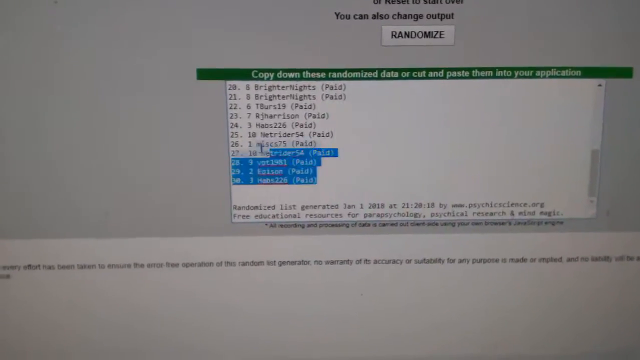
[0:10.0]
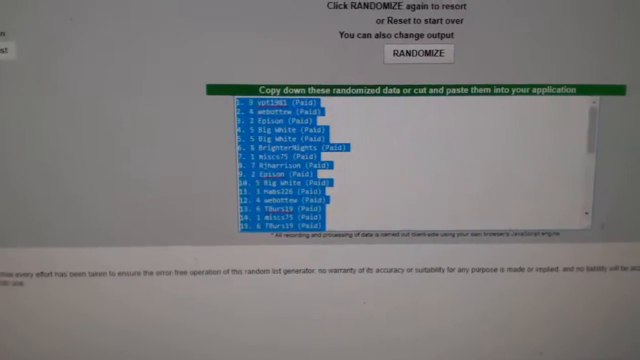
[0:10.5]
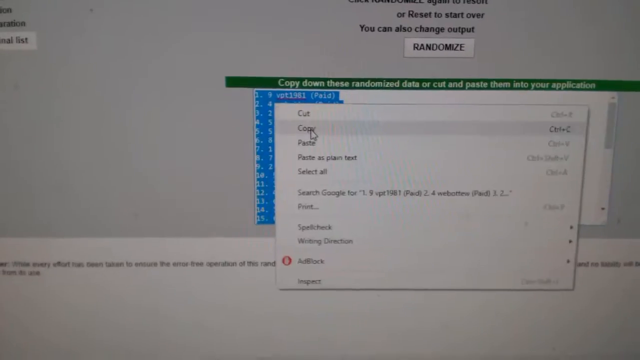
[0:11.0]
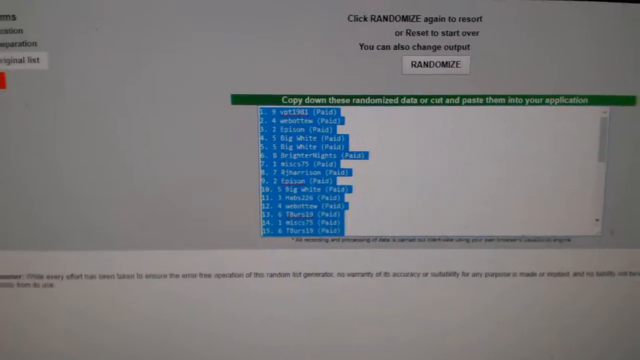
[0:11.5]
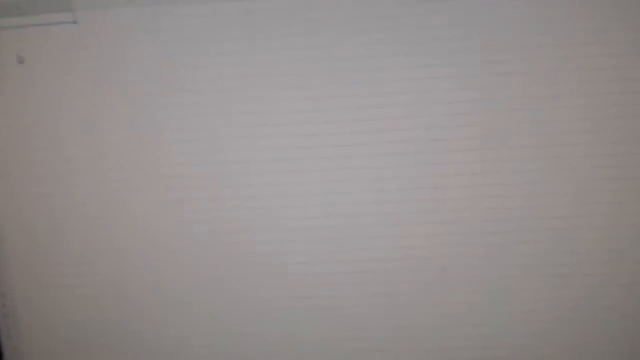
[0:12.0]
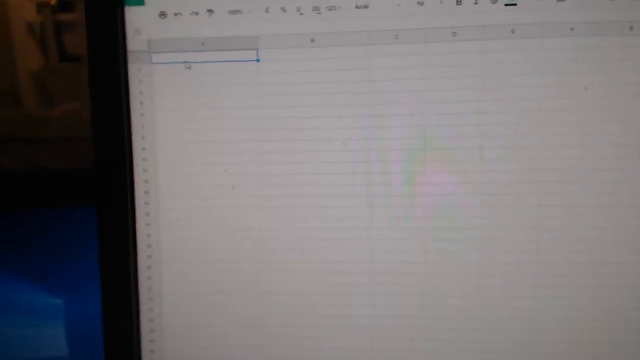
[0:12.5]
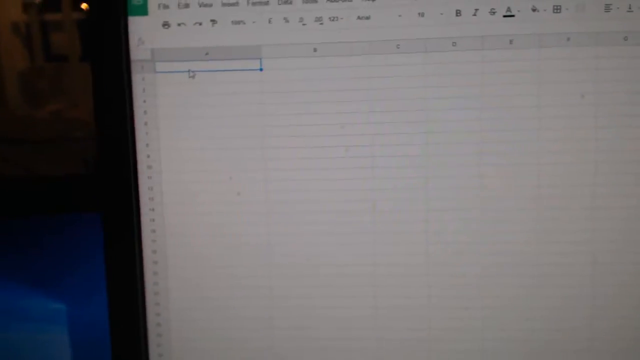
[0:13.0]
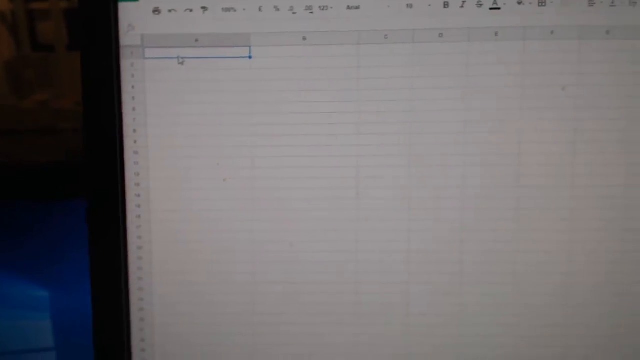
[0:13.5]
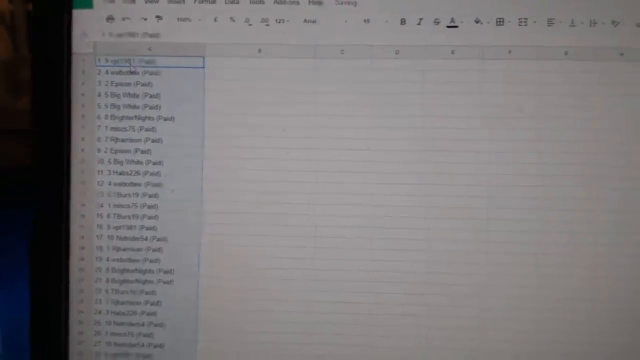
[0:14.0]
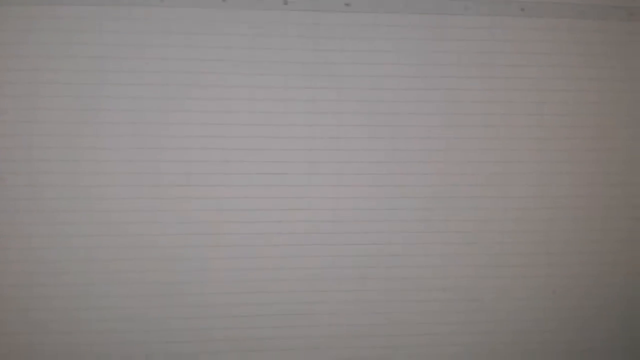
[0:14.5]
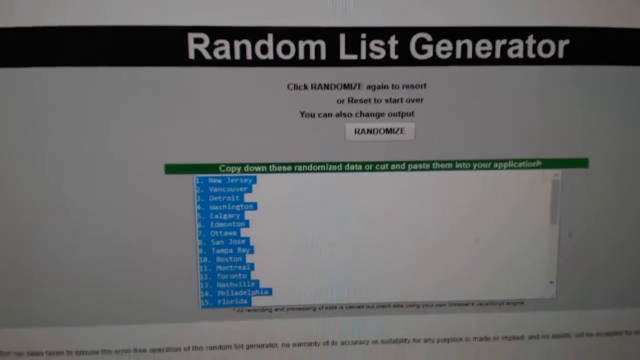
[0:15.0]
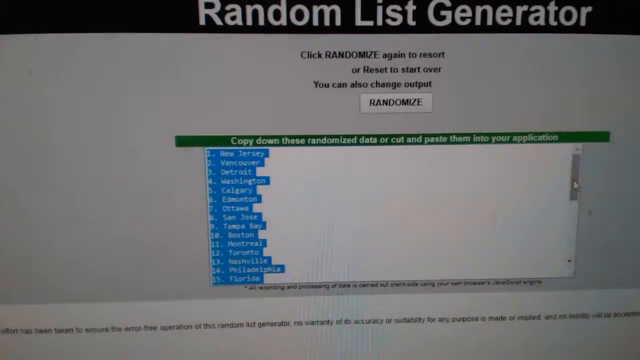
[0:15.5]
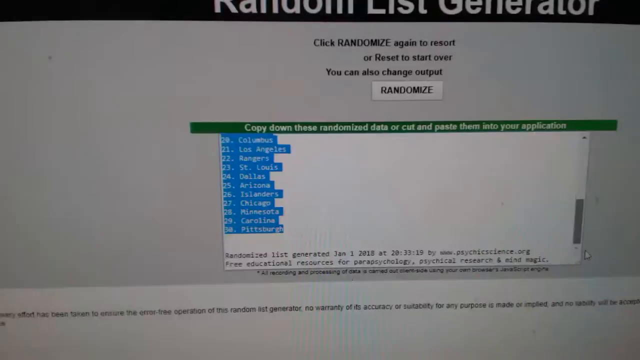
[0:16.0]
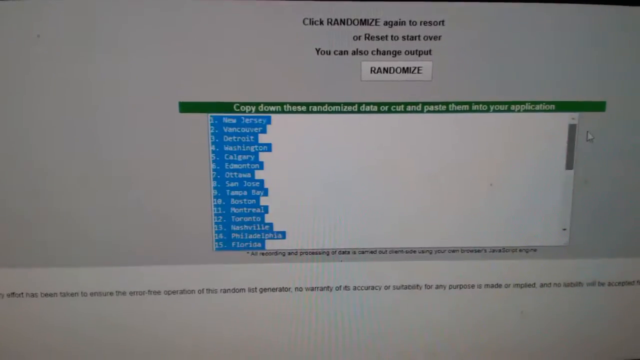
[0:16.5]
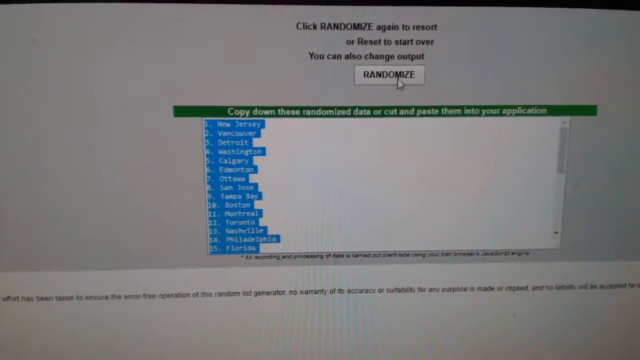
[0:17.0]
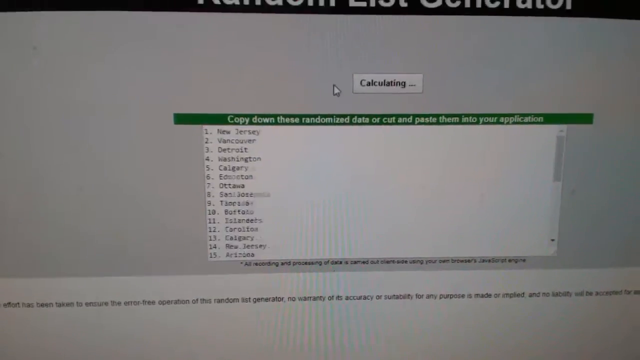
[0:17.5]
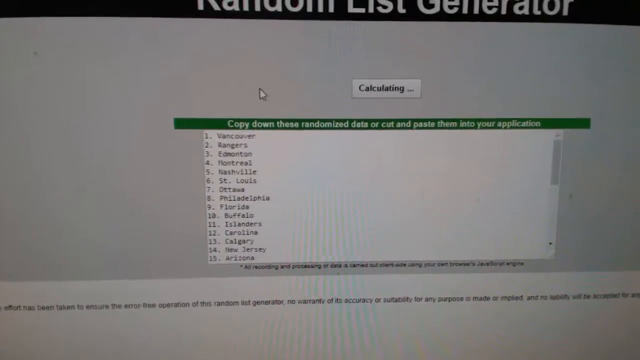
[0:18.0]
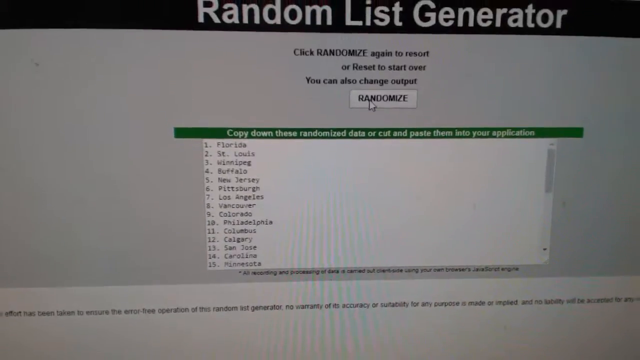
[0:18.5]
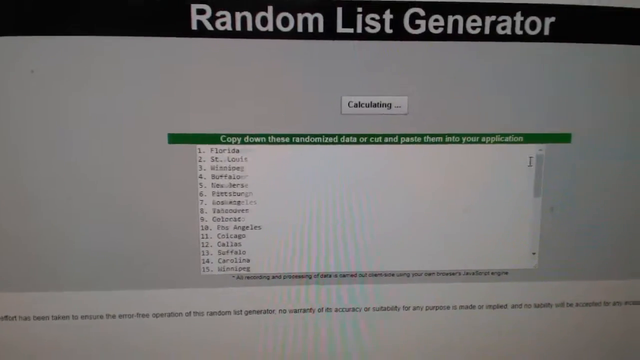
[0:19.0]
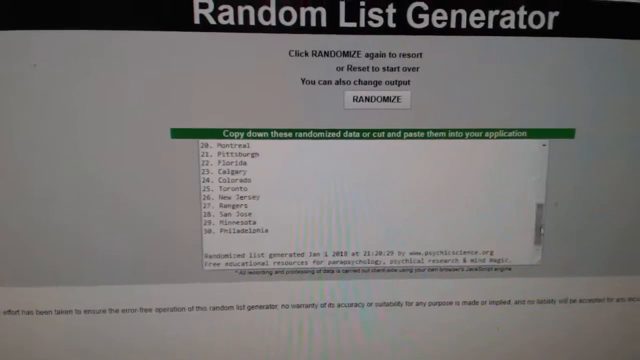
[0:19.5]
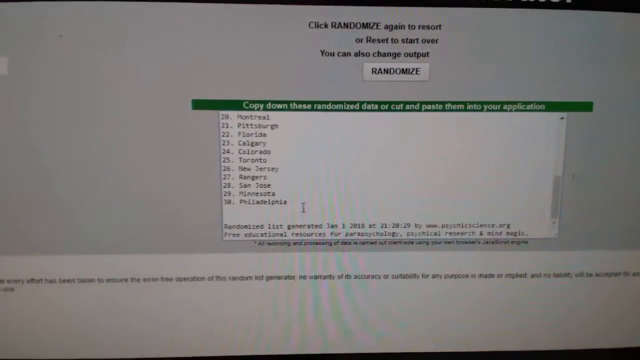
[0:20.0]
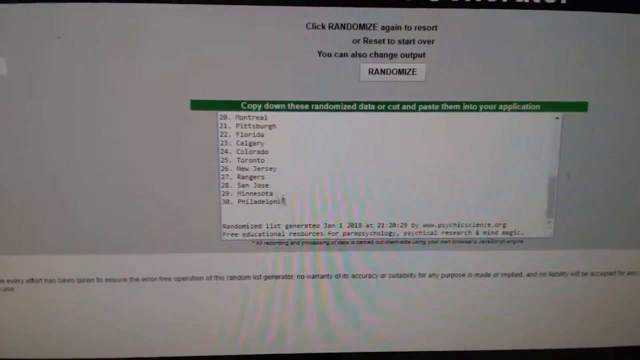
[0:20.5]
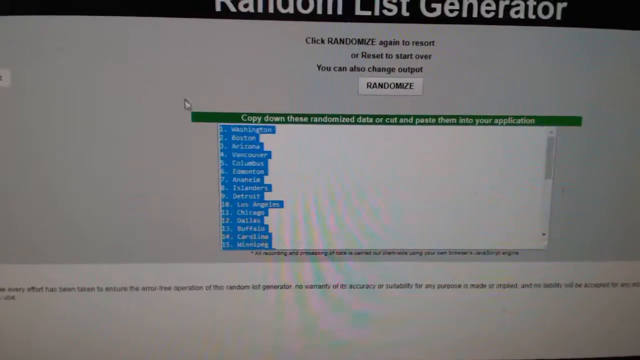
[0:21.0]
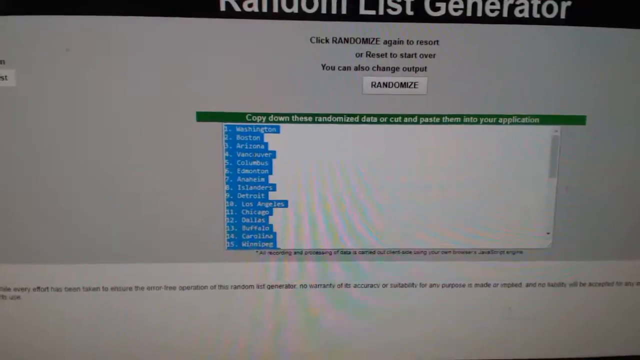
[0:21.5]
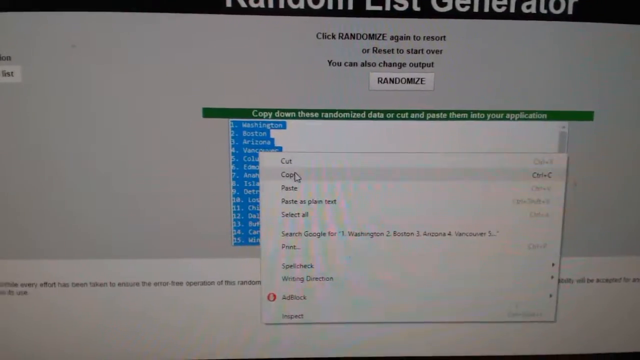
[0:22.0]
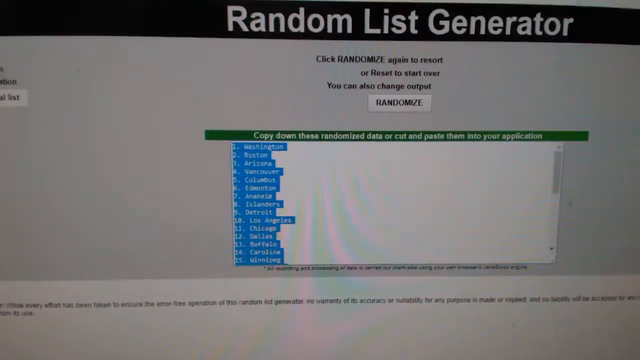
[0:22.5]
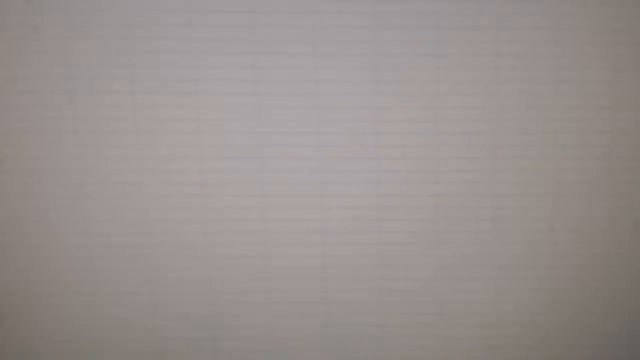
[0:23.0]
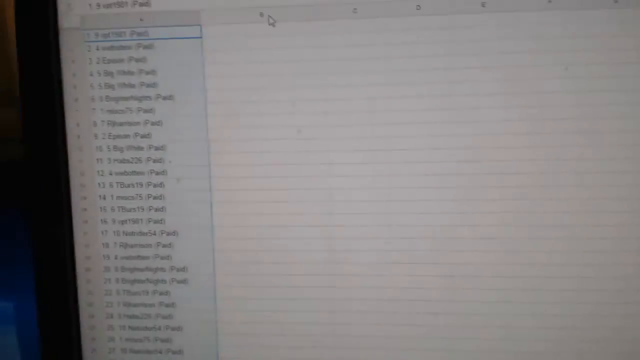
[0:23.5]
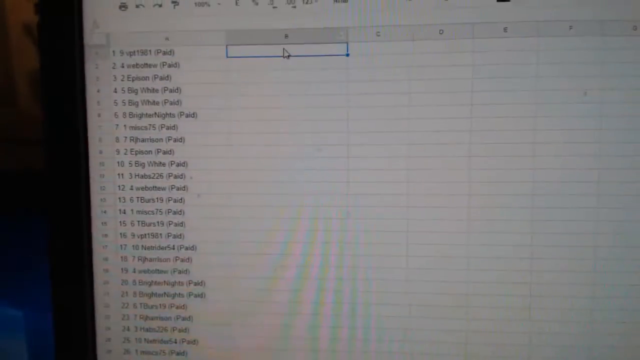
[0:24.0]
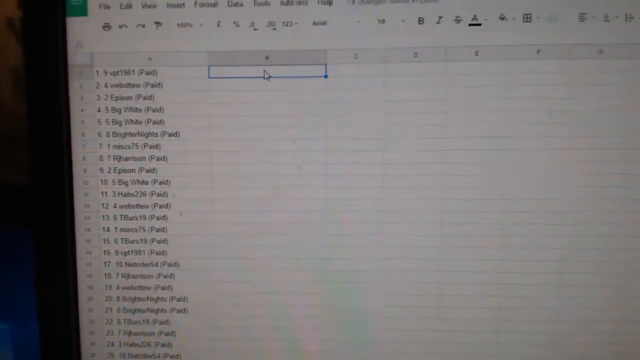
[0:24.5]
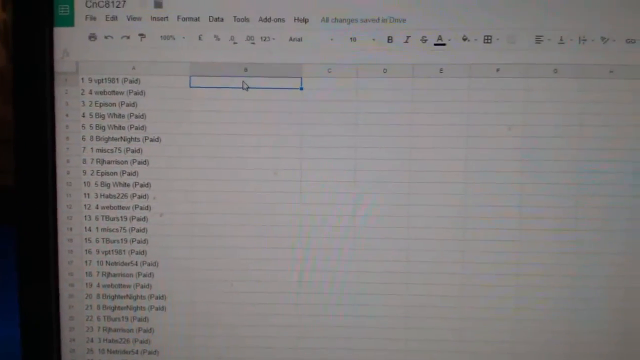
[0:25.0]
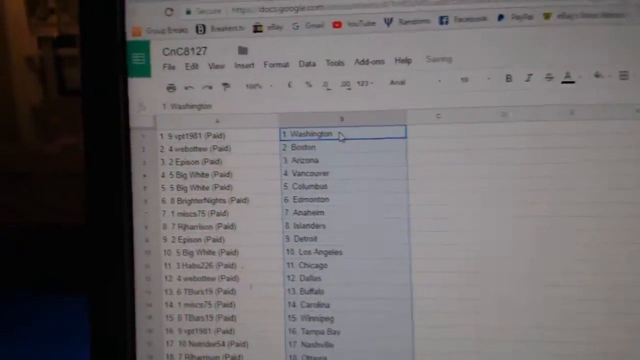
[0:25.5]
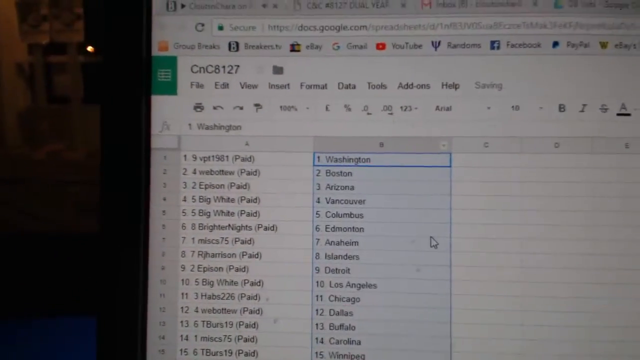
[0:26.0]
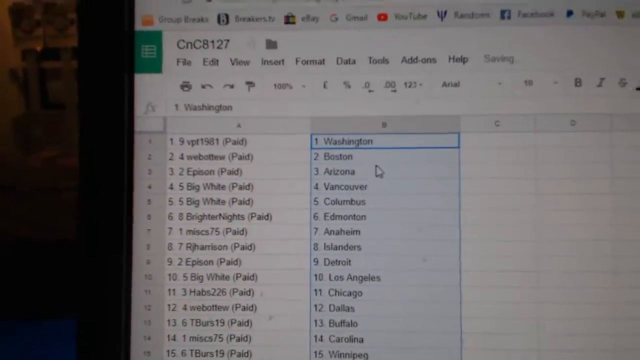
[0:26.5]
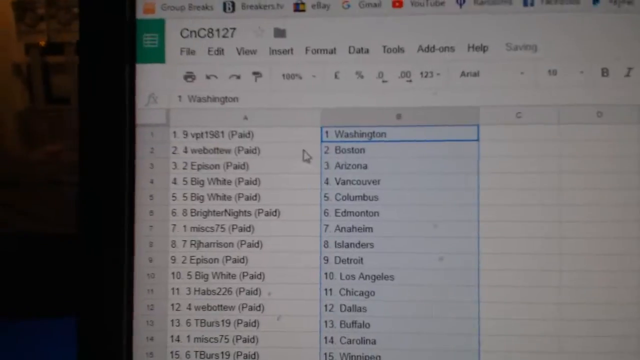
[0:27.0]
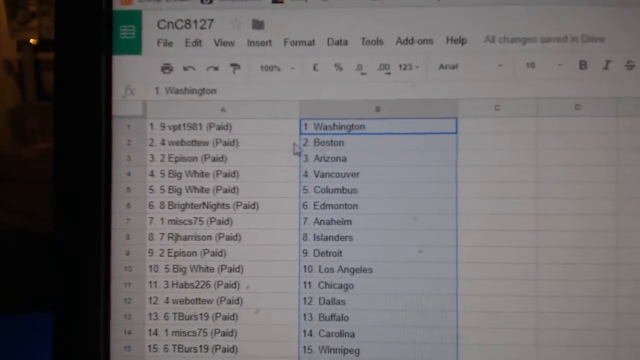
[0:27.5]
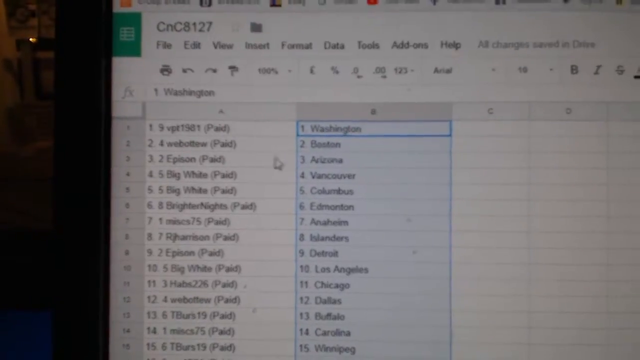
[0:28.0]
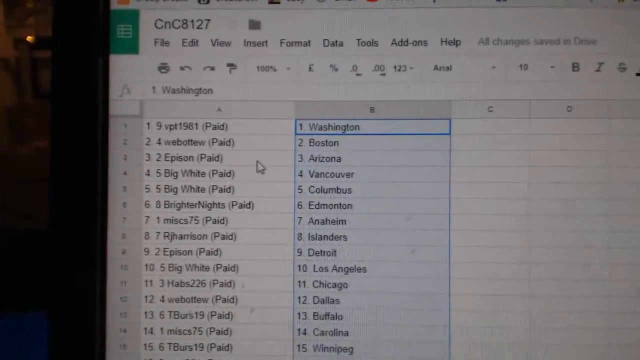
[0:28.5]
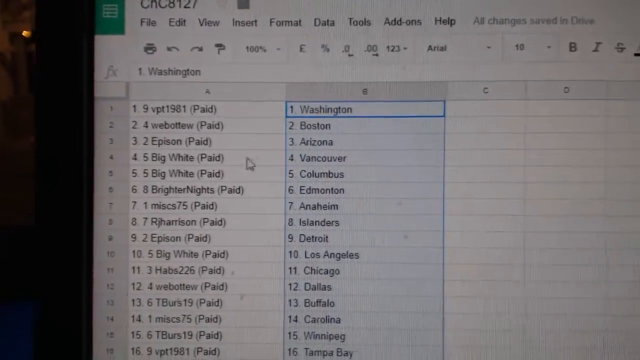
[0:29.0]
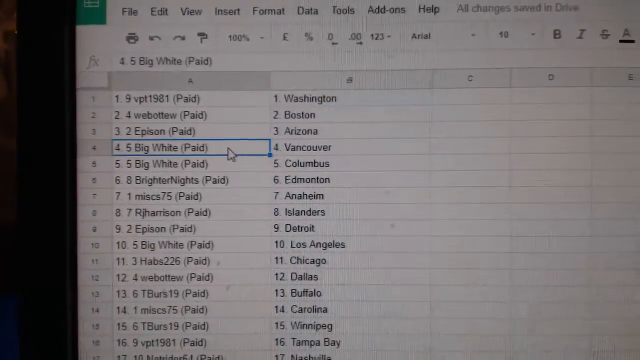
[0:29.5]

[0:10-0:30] Some of the text options are being highlighted. There is a button that says "Randomize," and text that says "copy down these randomized data or cut and paste them into your application." The entries appear to be numbered from 20 to 30 and seem to contain random bits of information. The person seems to have highlighted all of them; they turn blue as if highlighted, and then apparently are copied. The text says this is on a random list generator. The camera sort of orients itself so the top of the screen is visible, and the person appears to be copying the information from the list and pasting it onto an Excel sheet. They copy a number of these lists into a column: column one fills with the copied text, then they go to column two and paste more information copied from the generated random words.